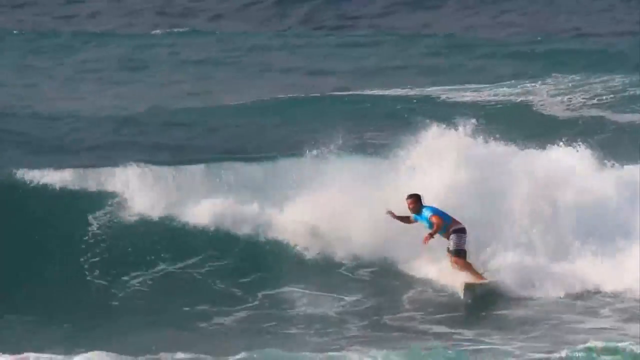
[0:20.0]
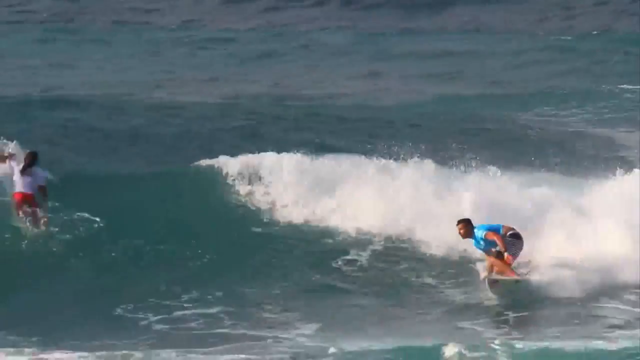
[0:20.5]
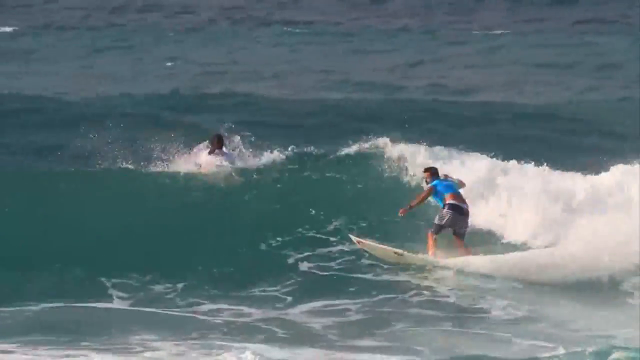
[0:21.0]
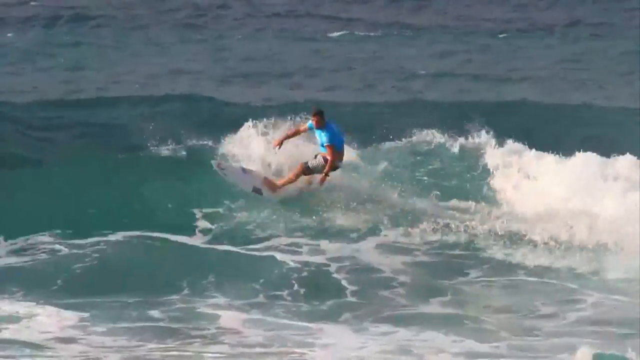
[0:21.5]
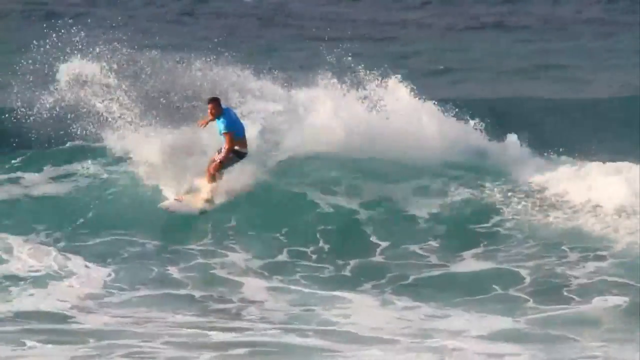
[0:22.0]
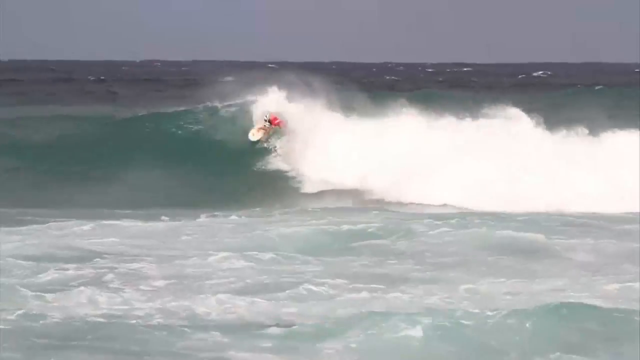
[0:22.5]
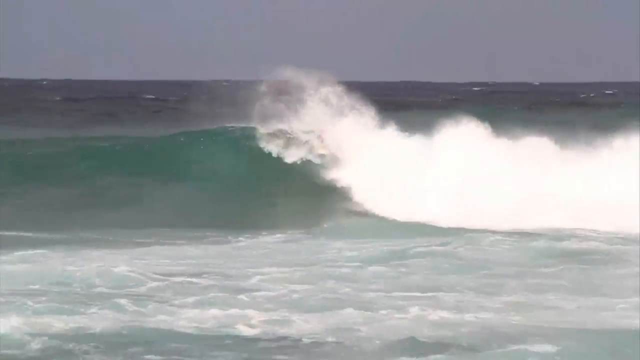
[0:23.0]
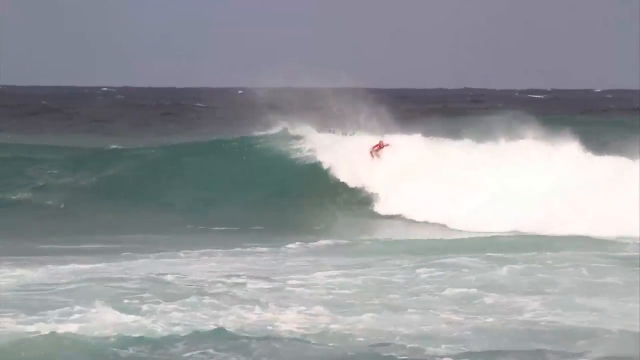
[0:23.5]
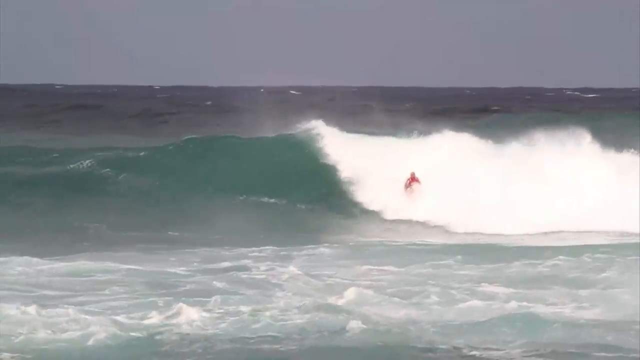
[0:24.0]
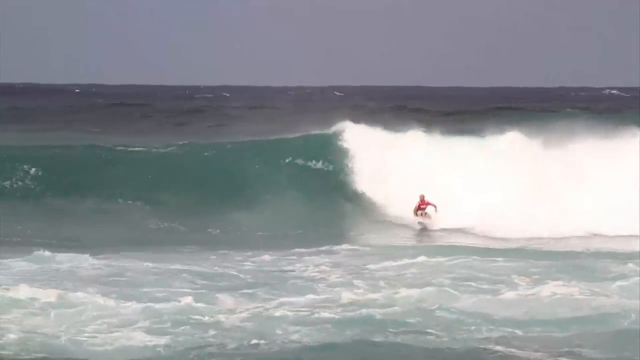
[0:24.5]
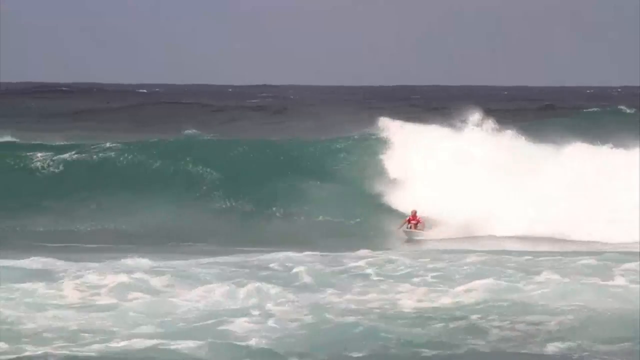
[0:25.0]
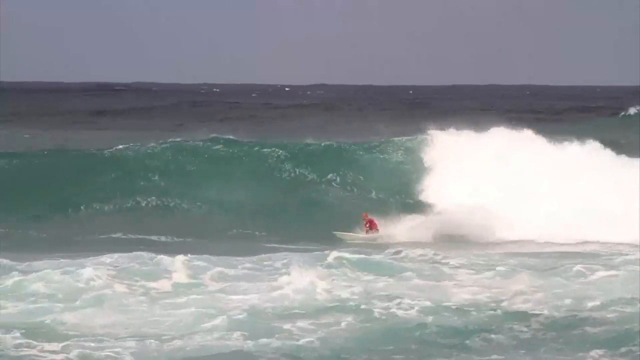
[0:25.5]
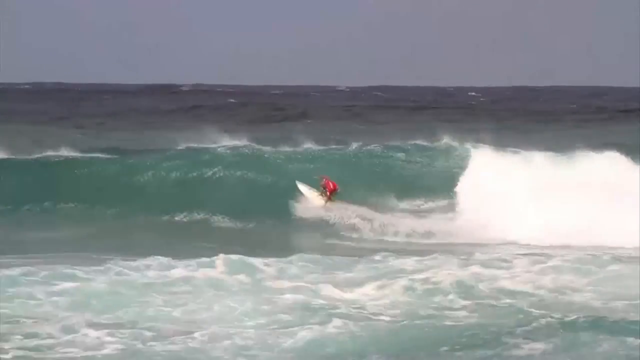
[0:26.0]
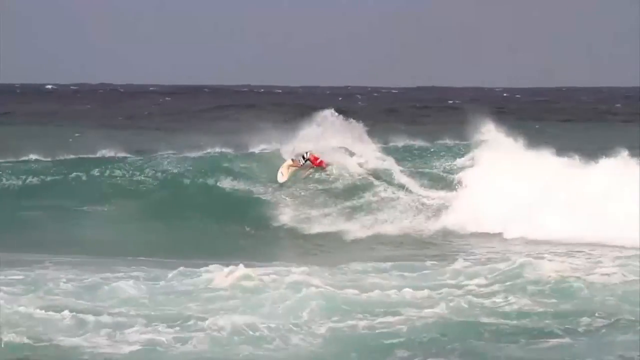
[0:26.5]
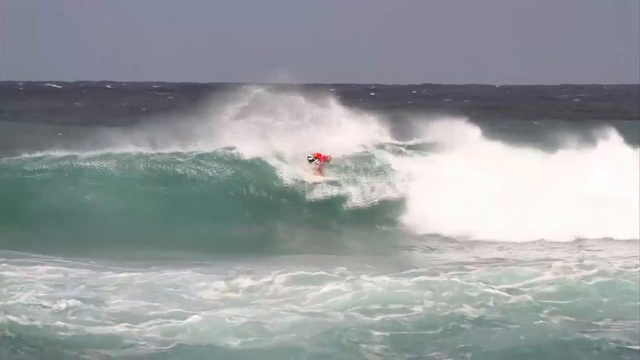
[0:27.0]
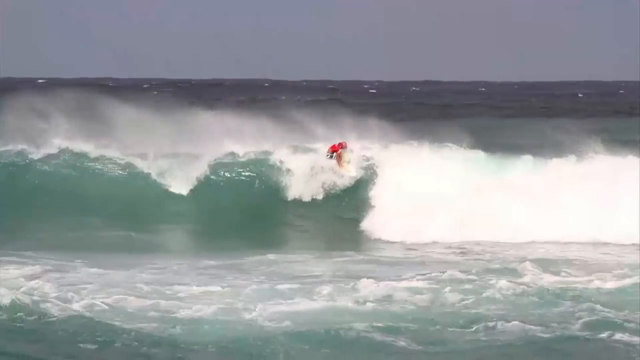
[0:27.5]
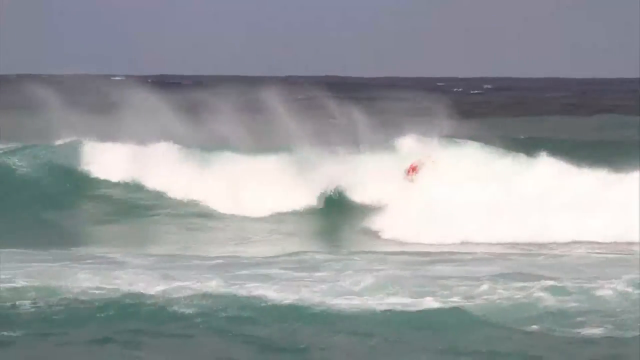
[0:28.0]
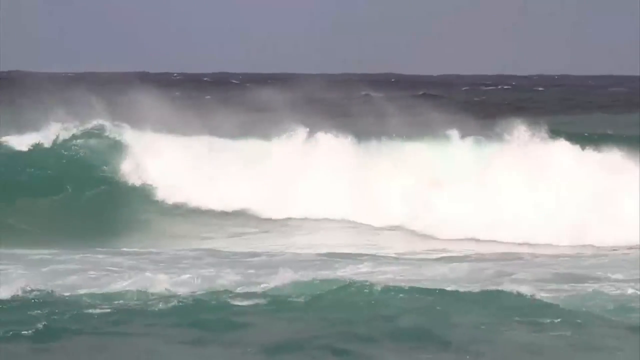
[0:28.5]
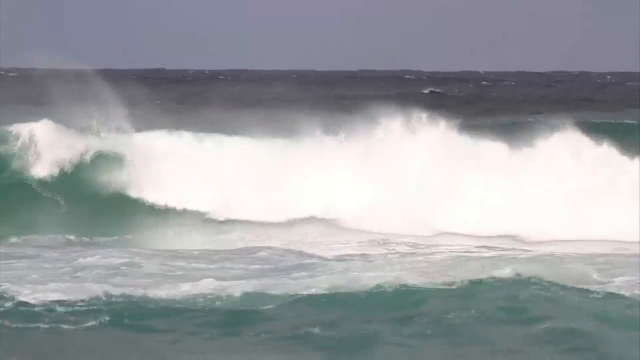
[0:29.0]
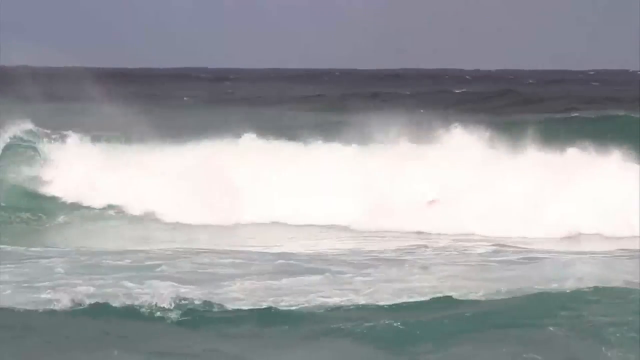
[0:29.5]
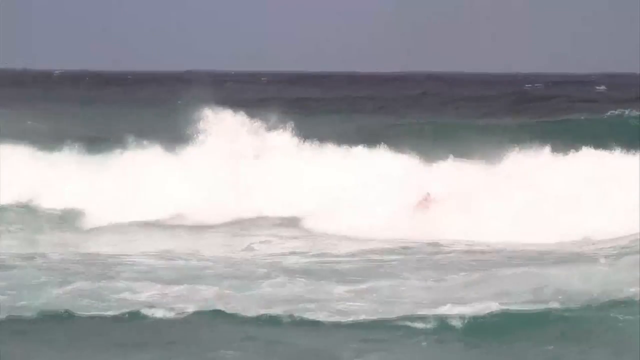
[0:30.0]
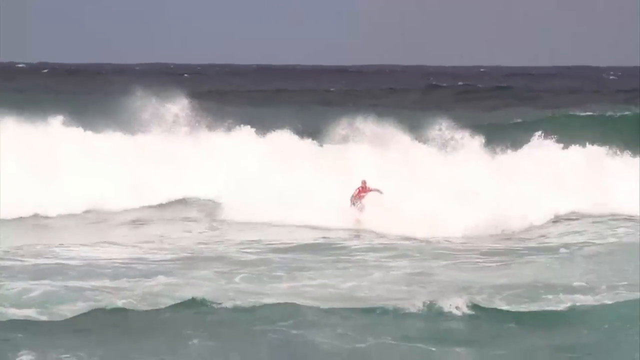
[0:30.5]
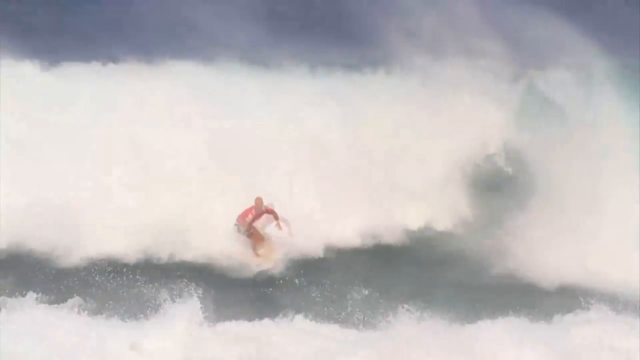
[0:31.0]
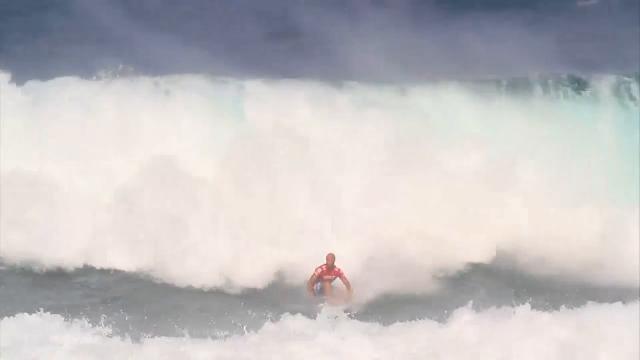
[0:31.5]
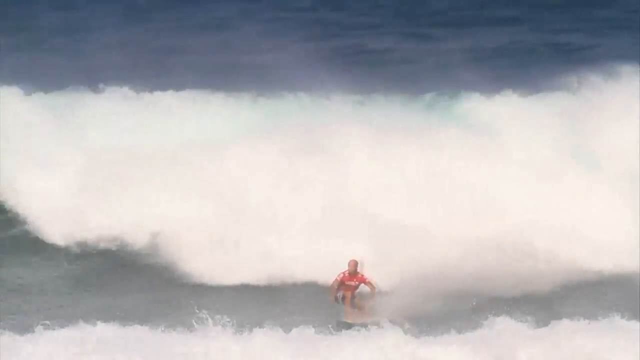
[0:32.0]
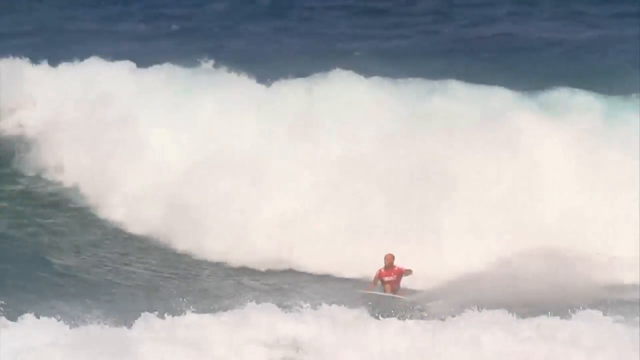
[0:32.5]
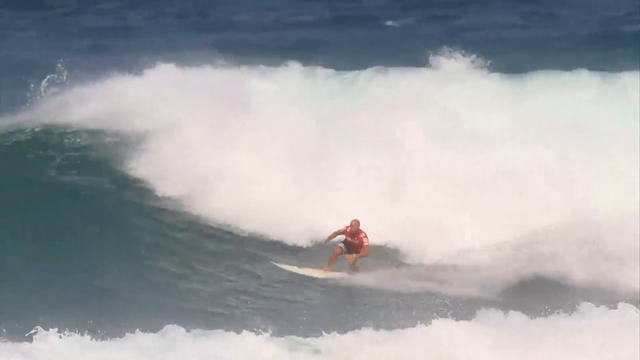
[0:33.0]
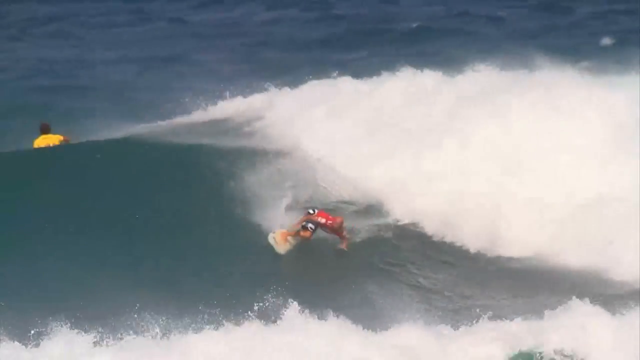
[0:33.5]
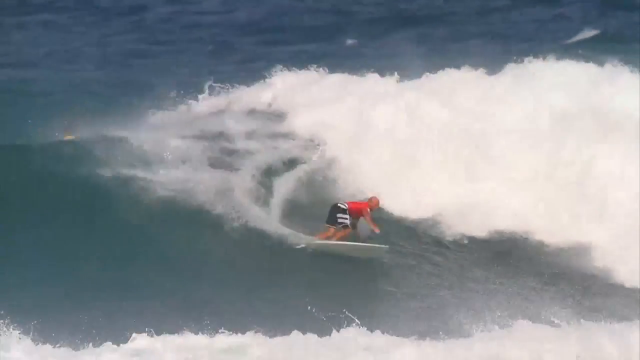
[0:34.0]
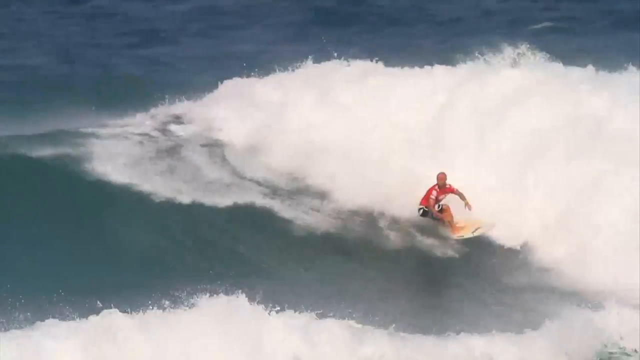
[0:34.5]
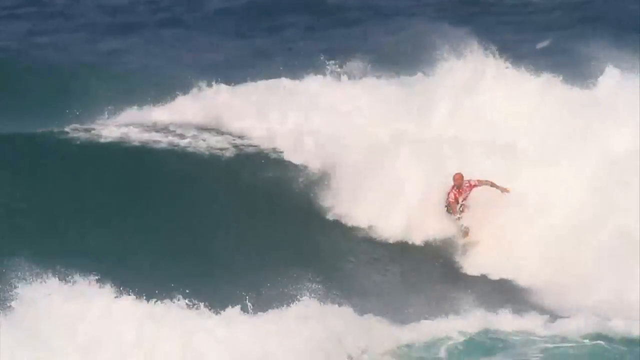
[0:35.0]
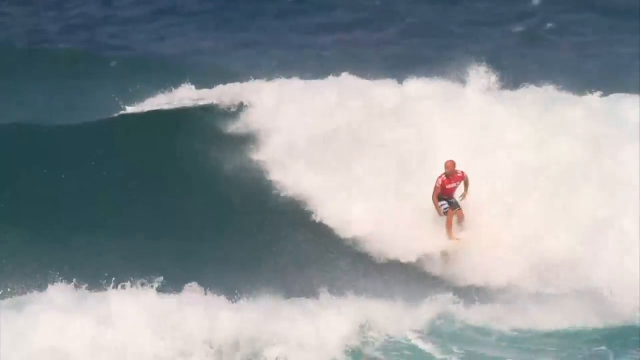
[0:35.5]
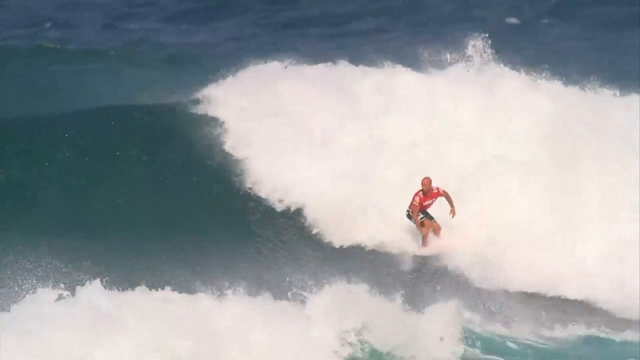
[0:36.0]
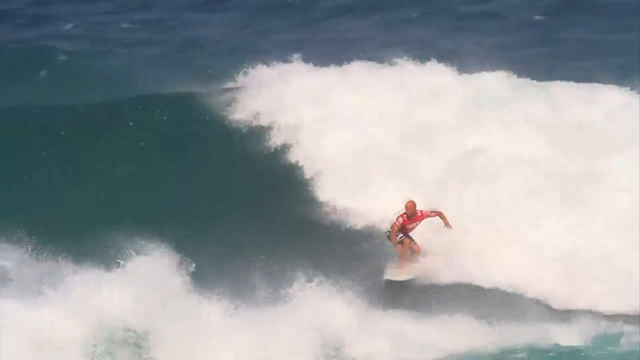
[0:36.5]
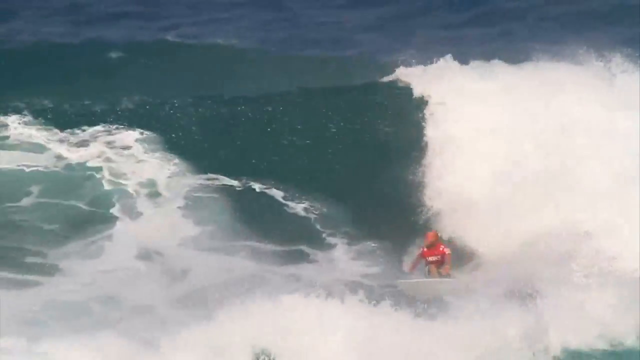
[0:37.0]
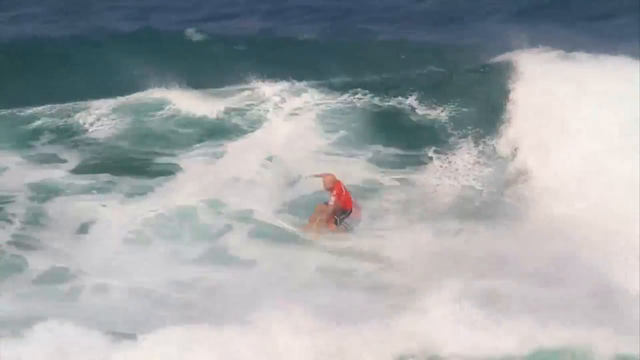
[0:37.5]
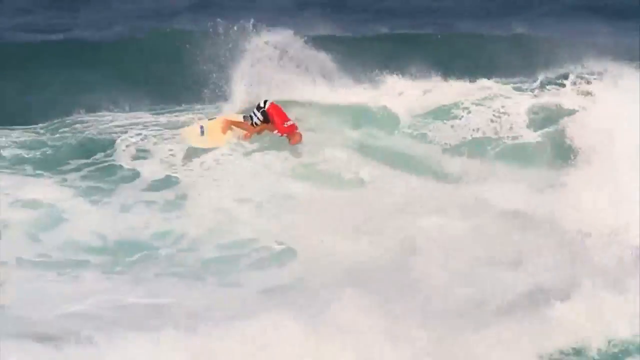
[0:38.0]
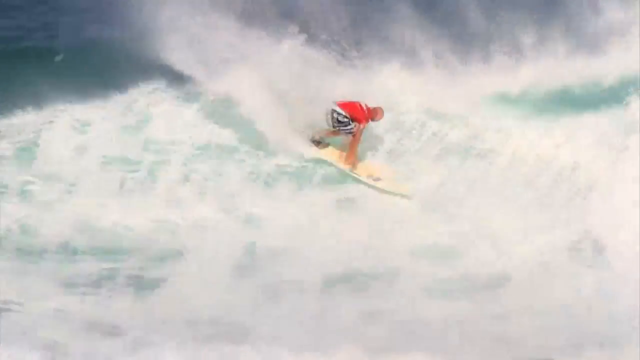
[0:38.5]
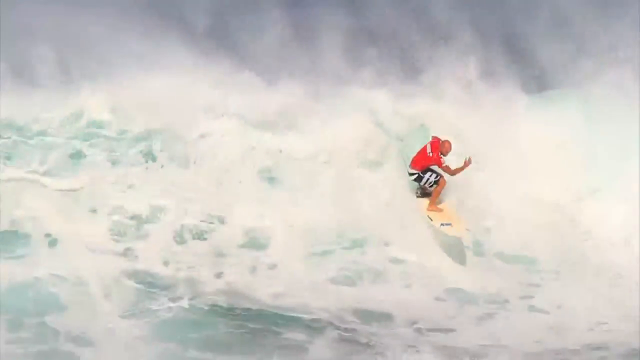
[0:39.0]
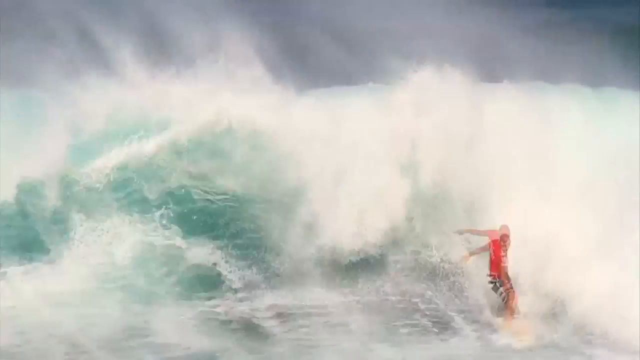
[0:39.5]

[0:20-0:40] Two people are surfboarding on the vigorous waves of the ocean. The water is a dark blue color, the same color as the sky, and it is daytime. The first man, closer to the bottom right-hand corner of the screen, rides a white surfboard and wears a blue metallic shirt. He has a beard and is bending over, riding the surfboard with his knees down as if skating in a rink. He rapidly moves from one side of the screen to the other, sliding as the water splashes forward and toward the side of his body. The other surfer briefly appears on screen but then is engulfed by the waves and is never seen again. The video cuts to a red surfer on a white surfboard, riding the tip of the waves again, as the wave splashes violently across the surface of the water, creating white mist and white rapids.